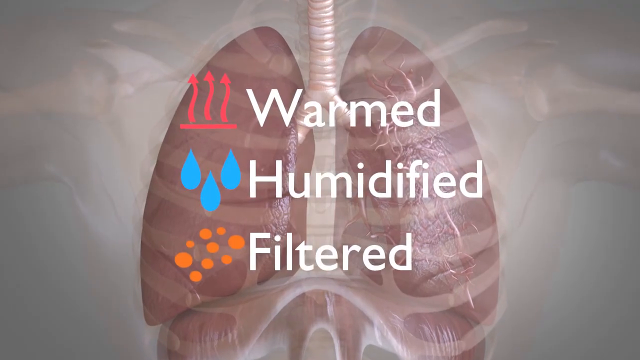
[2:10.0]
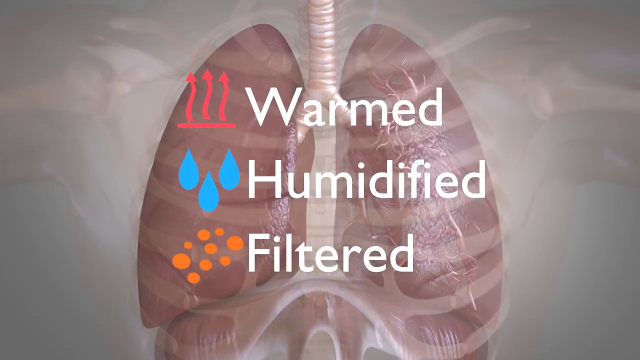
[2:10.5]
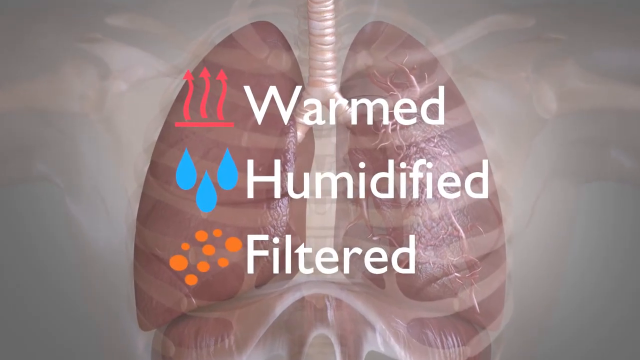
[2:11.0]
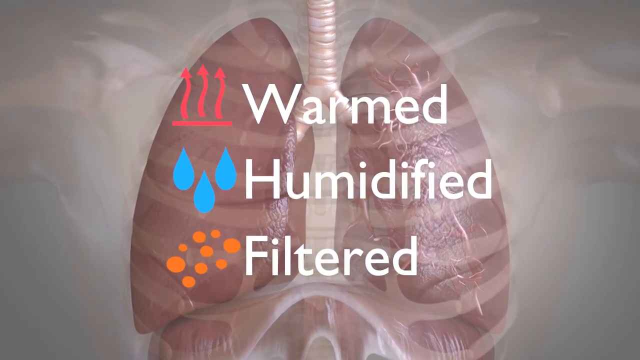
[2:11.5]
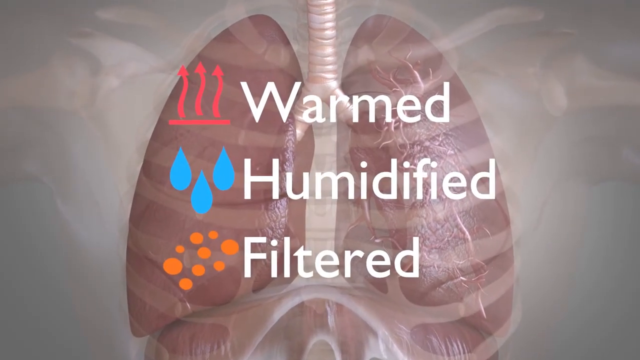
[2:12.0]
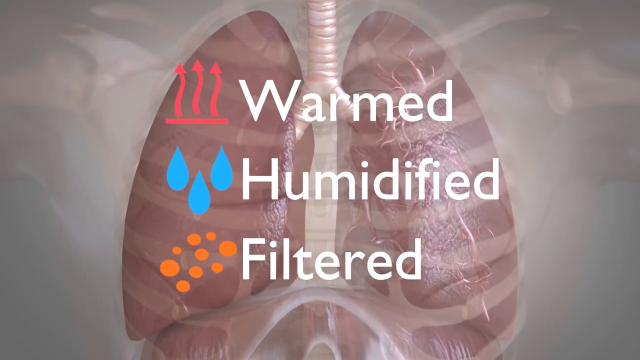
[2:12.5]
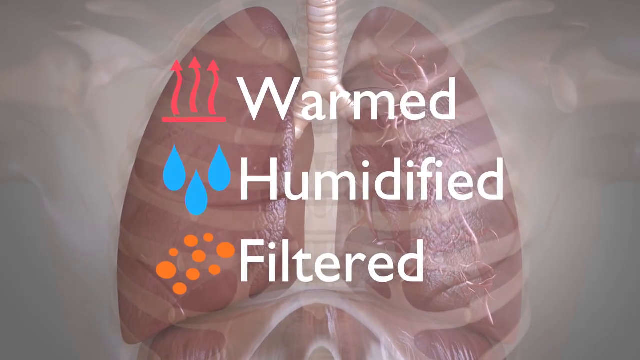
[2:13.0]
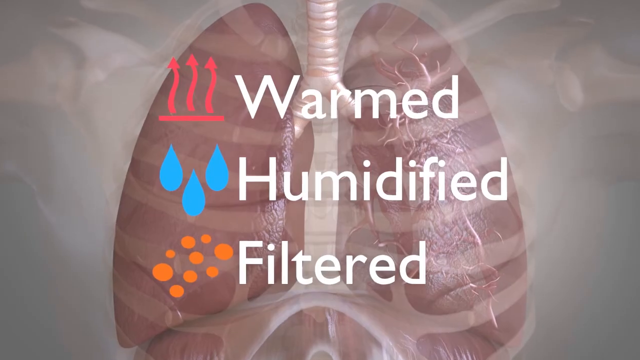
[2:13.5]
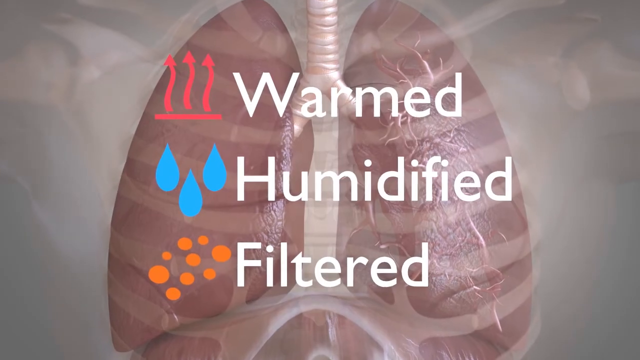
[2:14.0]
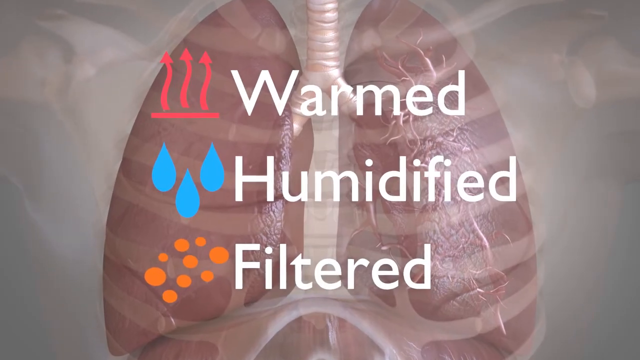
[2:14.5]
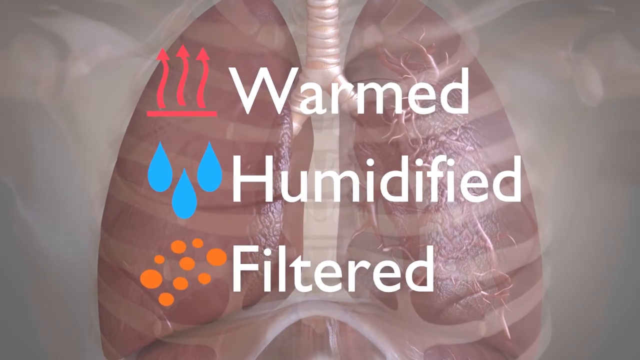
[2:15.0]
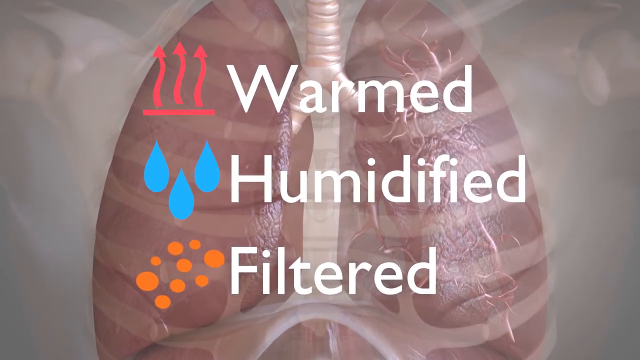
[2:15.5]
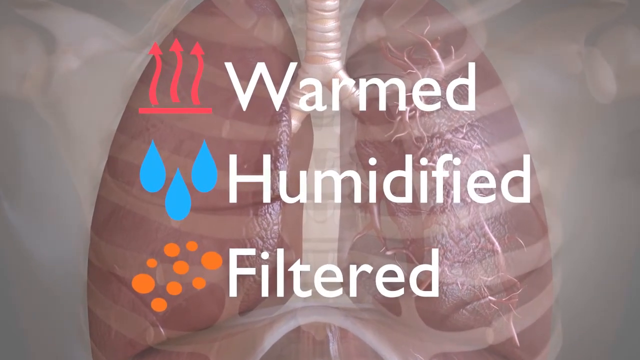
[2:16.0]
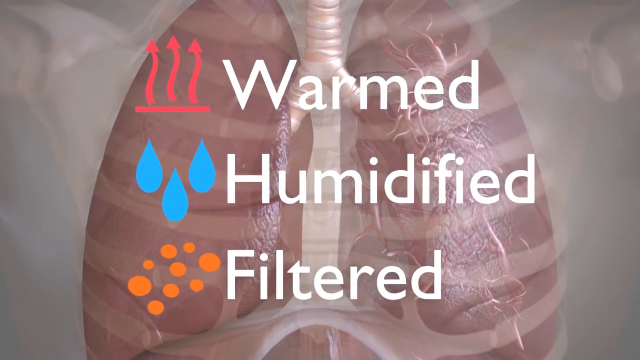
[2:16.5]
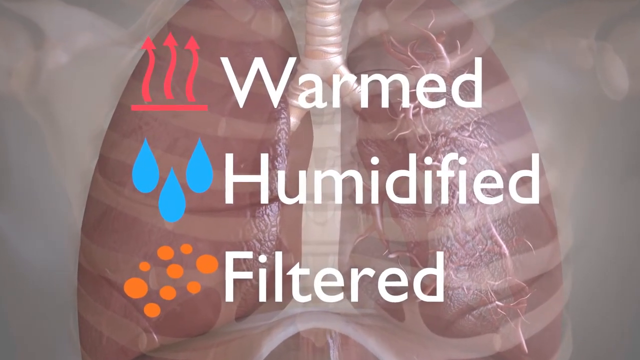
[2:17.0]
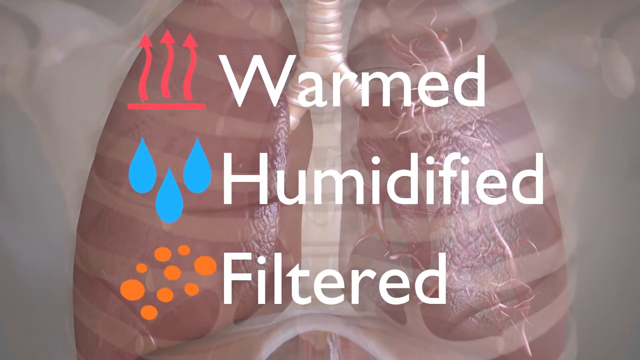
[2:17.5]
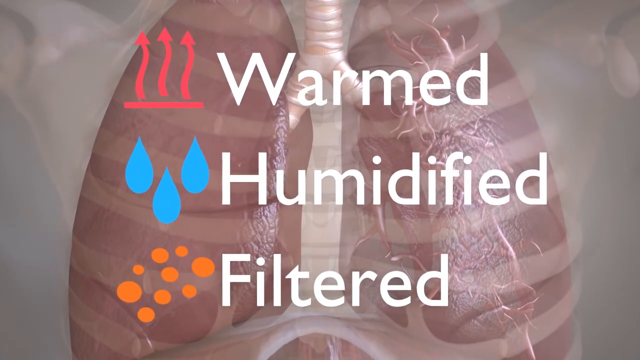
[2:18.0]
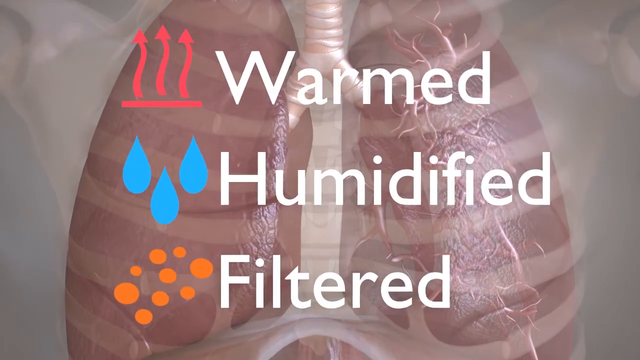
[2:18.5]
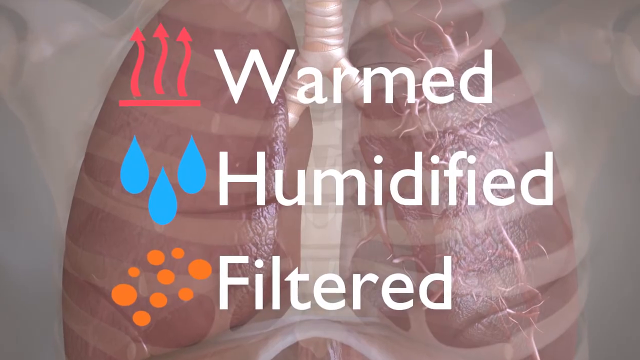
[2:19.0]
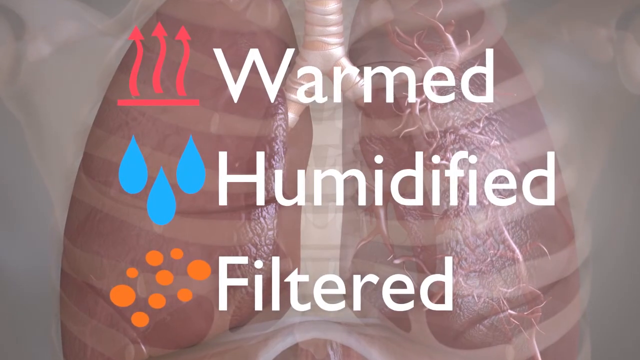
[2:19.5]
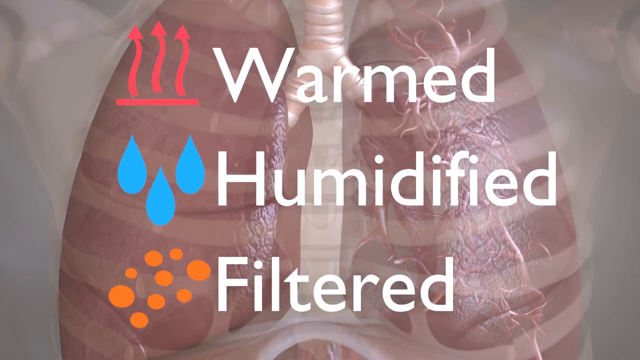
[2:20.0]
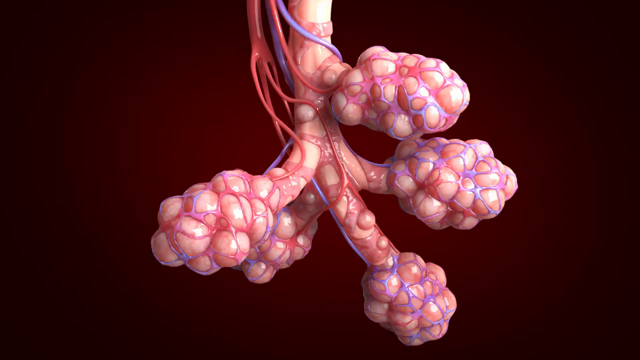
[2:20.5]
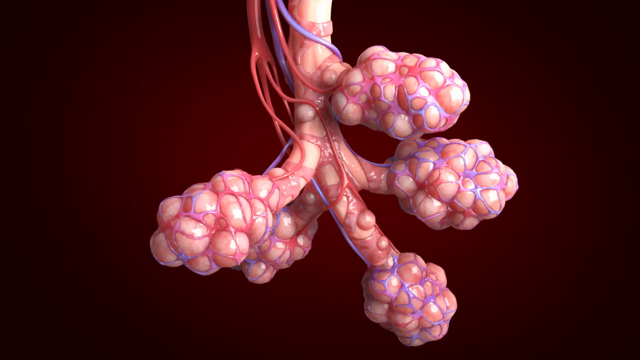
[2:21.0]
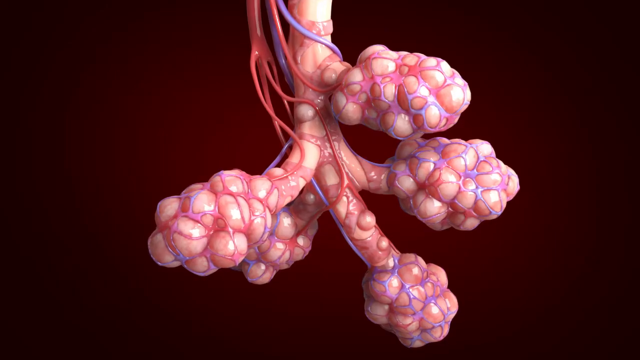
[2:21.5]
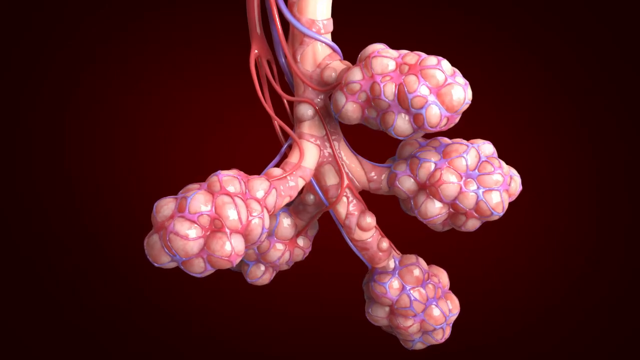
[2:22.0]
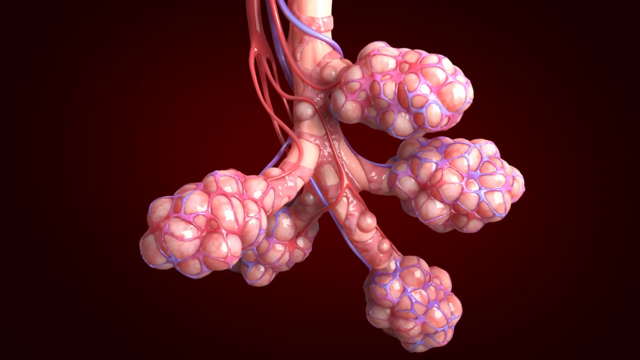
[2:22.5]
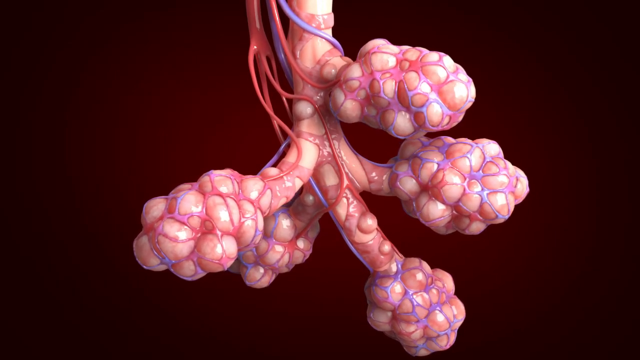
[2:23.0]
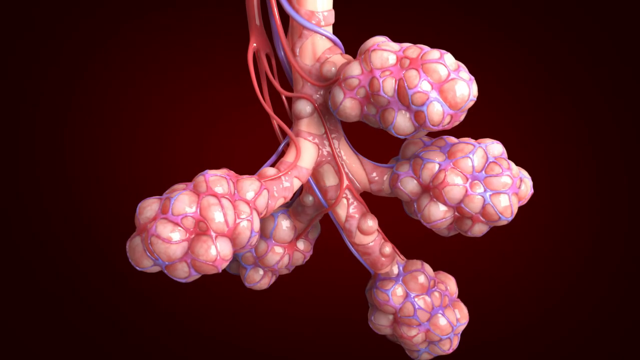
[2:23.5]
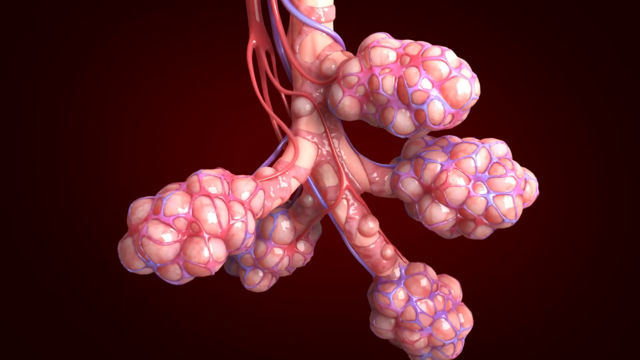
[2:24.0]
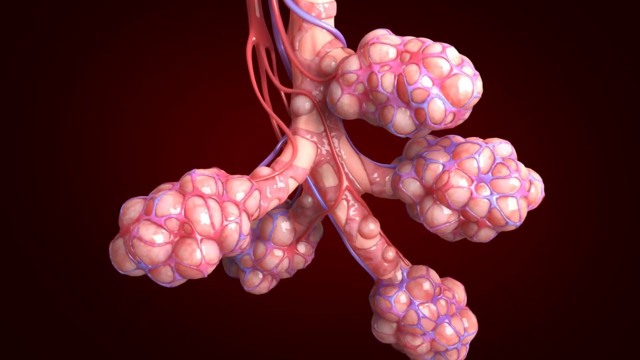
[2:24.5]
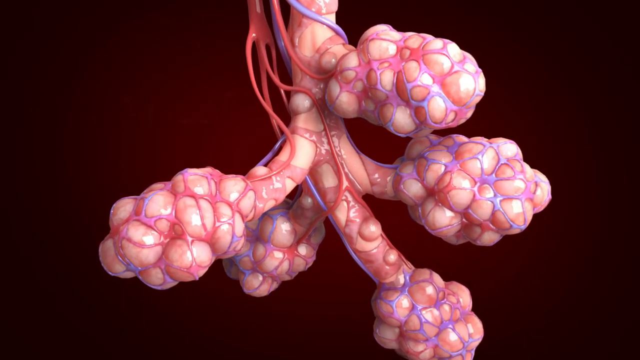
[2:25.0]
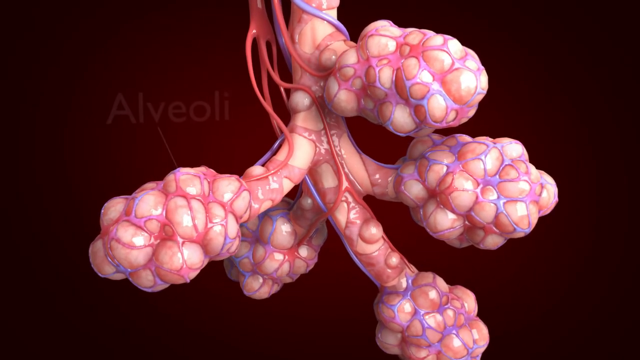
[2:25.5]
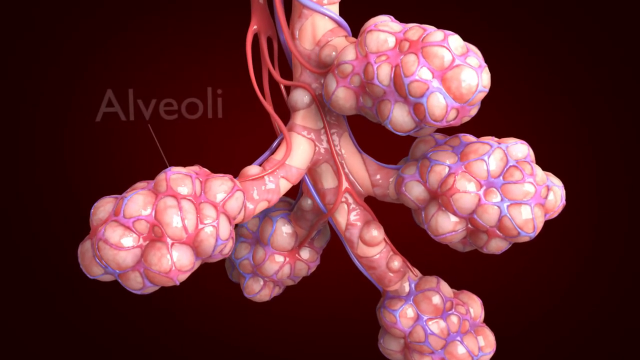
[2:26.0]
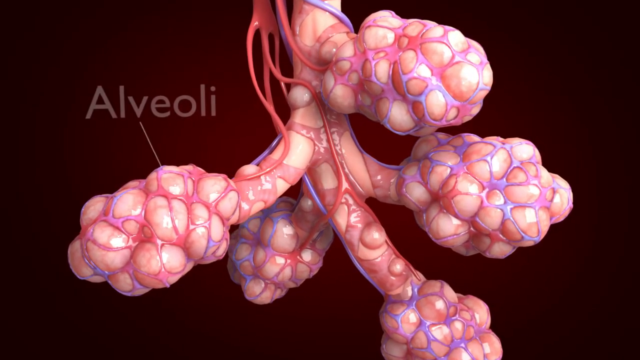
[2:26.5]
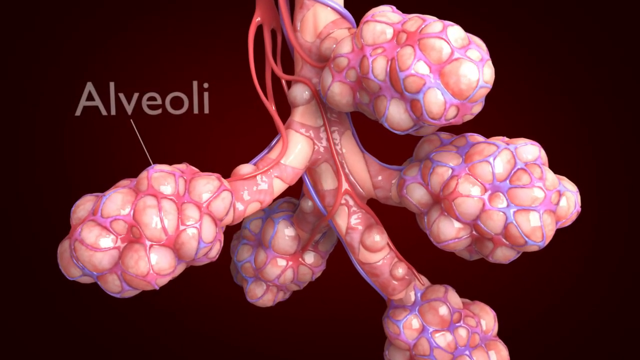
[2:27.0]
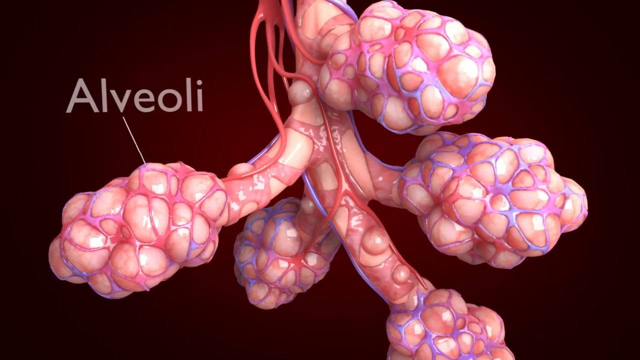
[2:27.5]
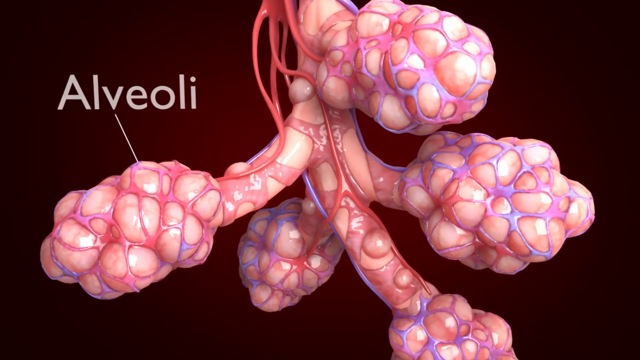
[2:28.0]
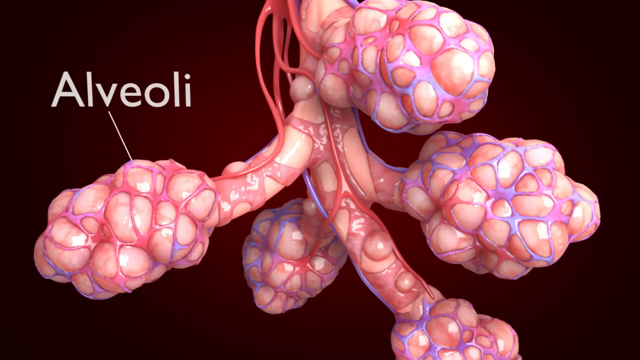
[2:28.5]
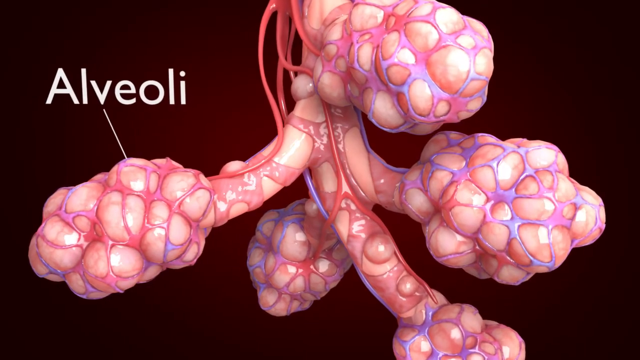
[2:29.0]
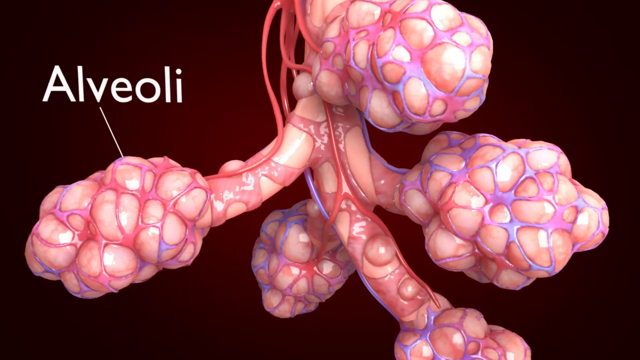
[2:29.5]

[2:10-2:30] A model shows the interior of the human respiratory system, with the lungs in pink and the bronchial tubes in white. A transparent overlay of the rib cage and the bones of the arms, extended on either side of the model, is visible. In the center of the screen is the word "Warmed" with a graphic of three wavy arrows pointing upward next to it; the word "Humidified" is below it with three blue drops, and the word "Filtered" appears at the bottom with a cluster of yellow dots. The camera moves in closer to the model and the words until they fill the screen. Then there is a close-up of alveoli inside the lungs: it looks like a pink tube that comes down and branches into five clusters of small pink bumps, with red veins and purple arteries wound around them. The word "Alveoli" appears with a white line pointing toward one of the clusters.